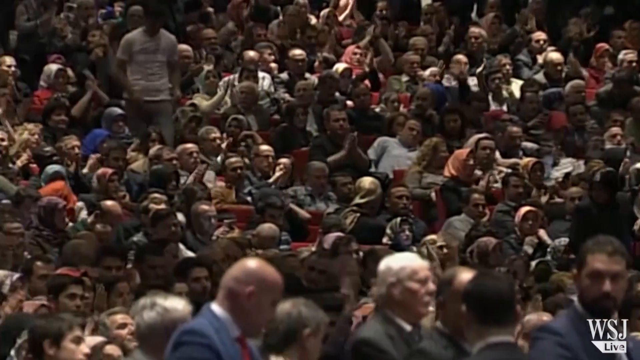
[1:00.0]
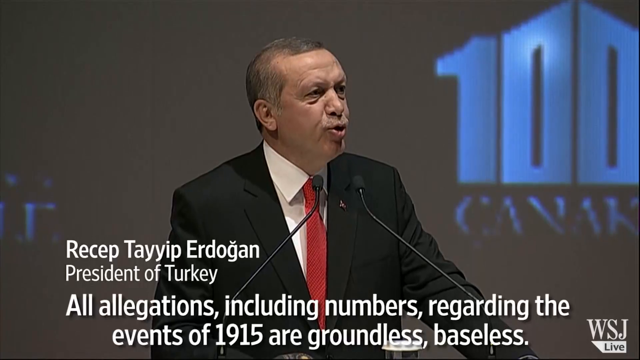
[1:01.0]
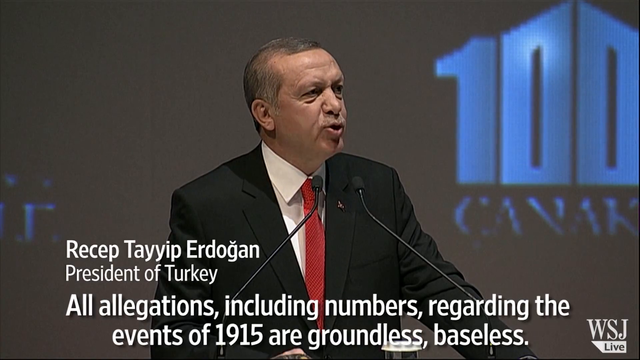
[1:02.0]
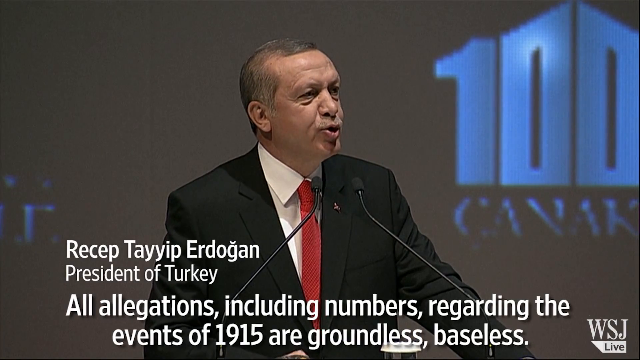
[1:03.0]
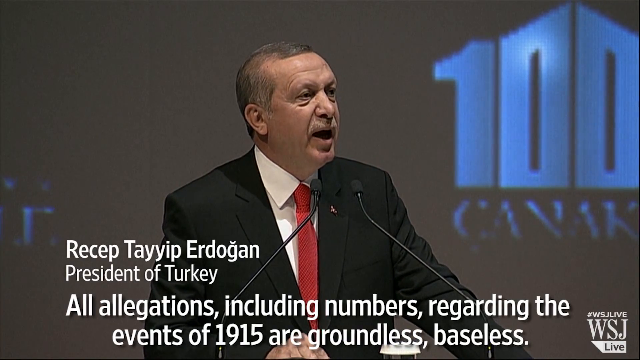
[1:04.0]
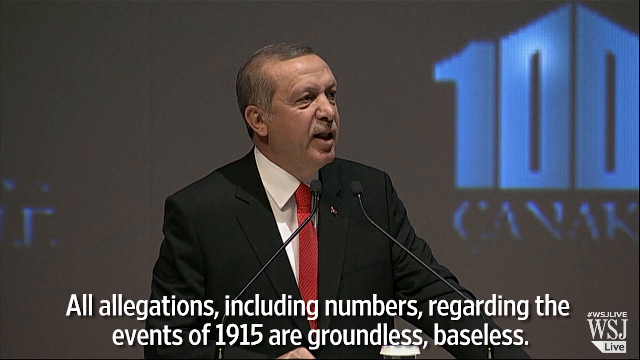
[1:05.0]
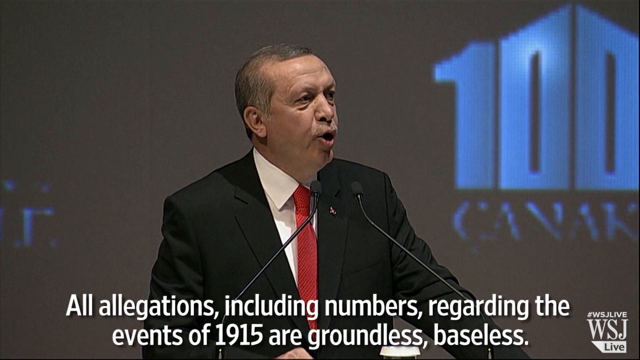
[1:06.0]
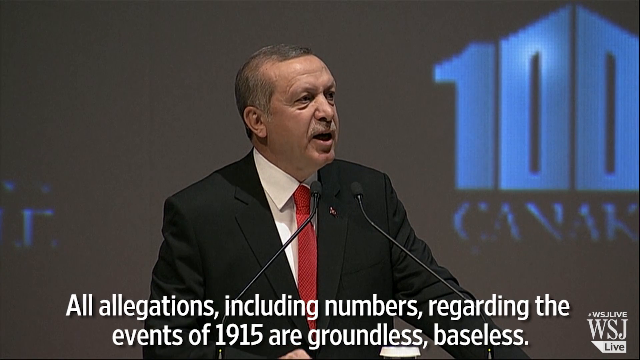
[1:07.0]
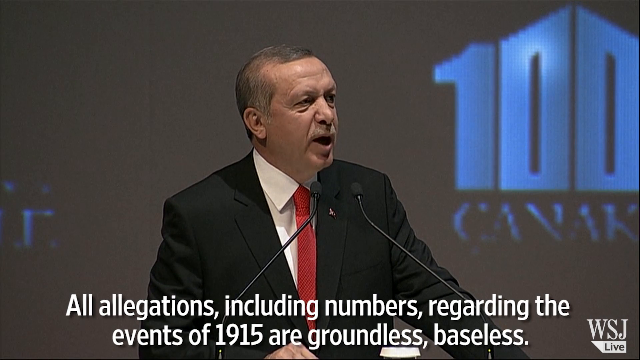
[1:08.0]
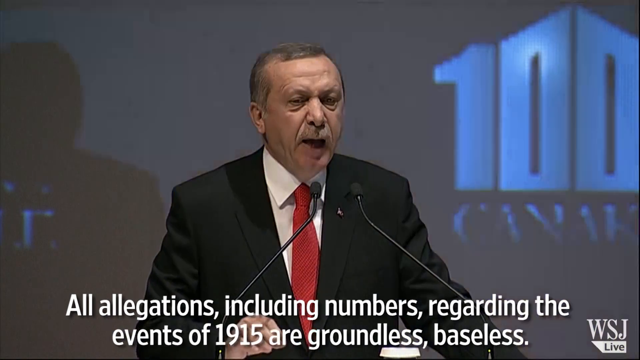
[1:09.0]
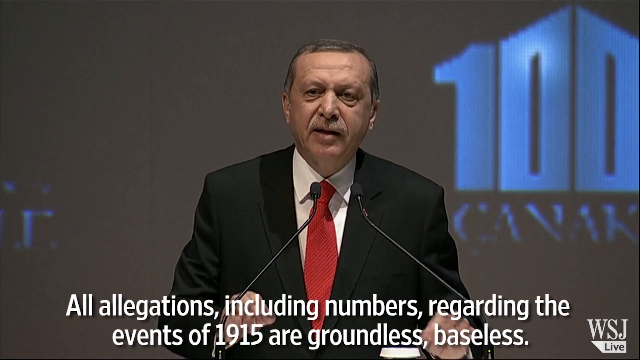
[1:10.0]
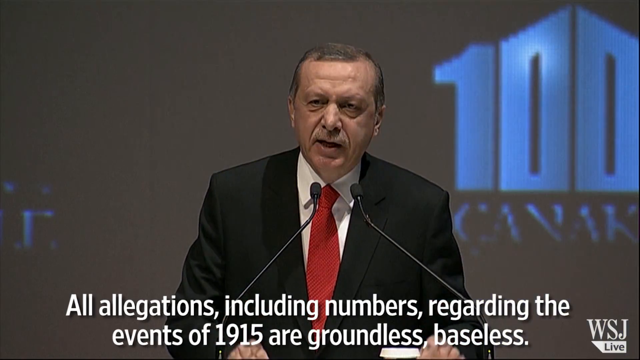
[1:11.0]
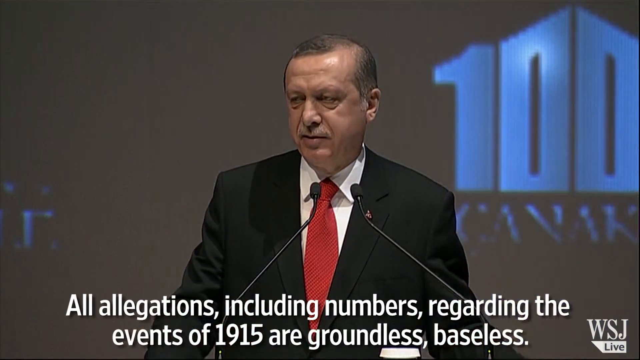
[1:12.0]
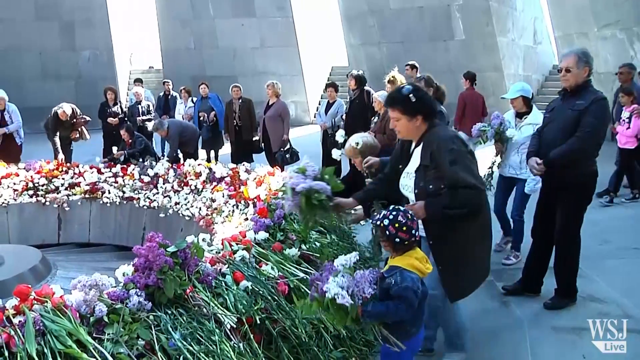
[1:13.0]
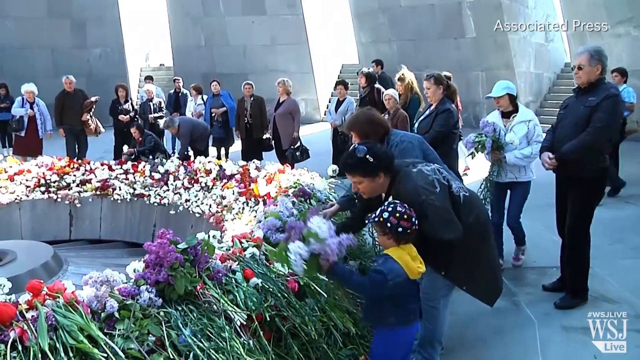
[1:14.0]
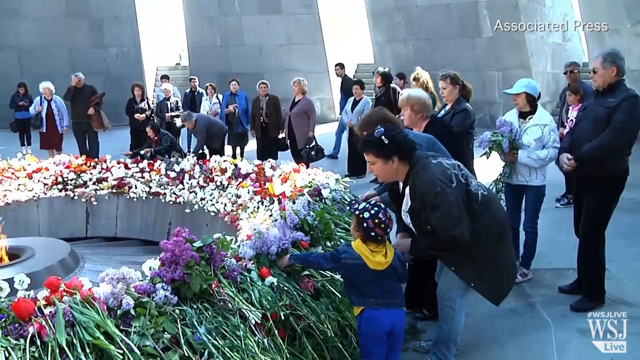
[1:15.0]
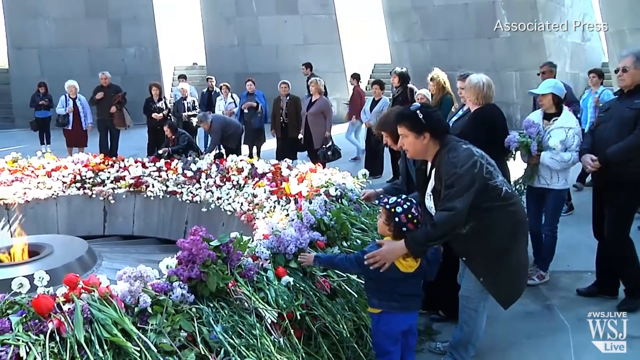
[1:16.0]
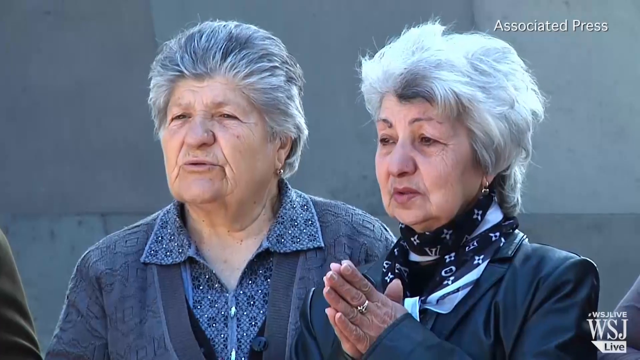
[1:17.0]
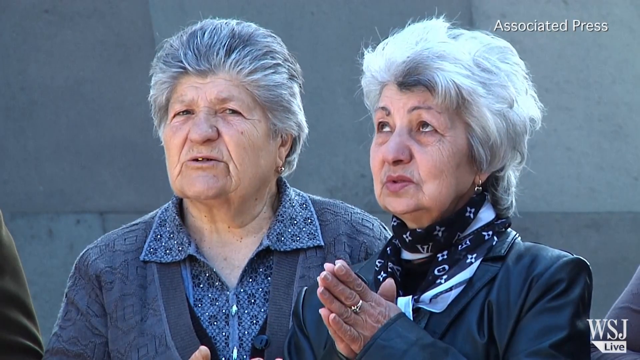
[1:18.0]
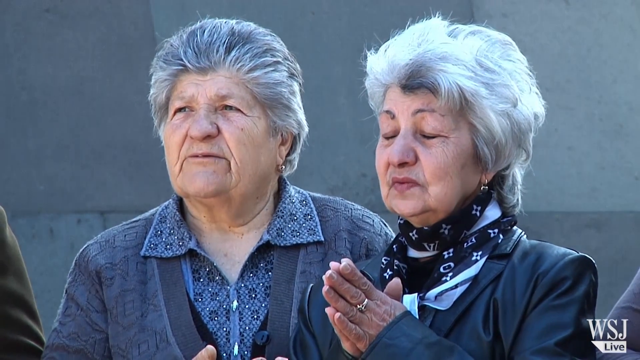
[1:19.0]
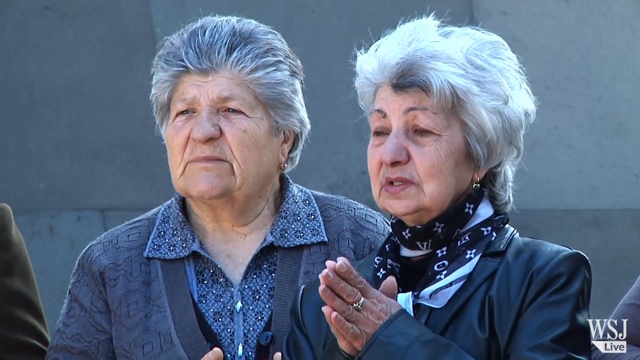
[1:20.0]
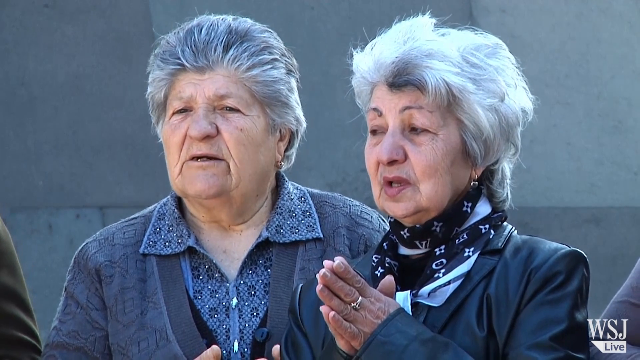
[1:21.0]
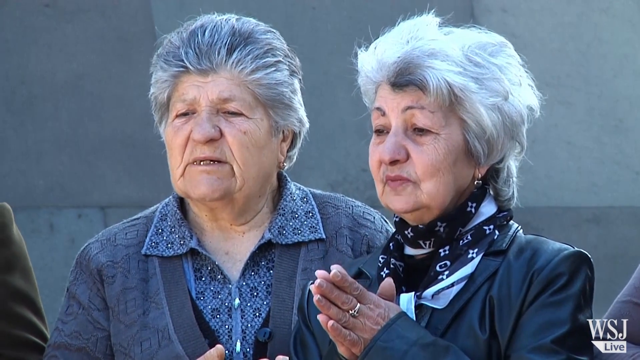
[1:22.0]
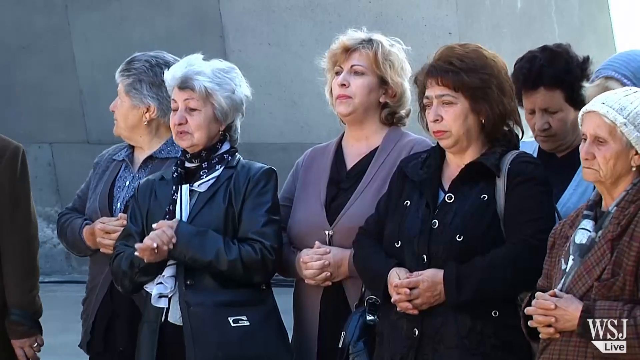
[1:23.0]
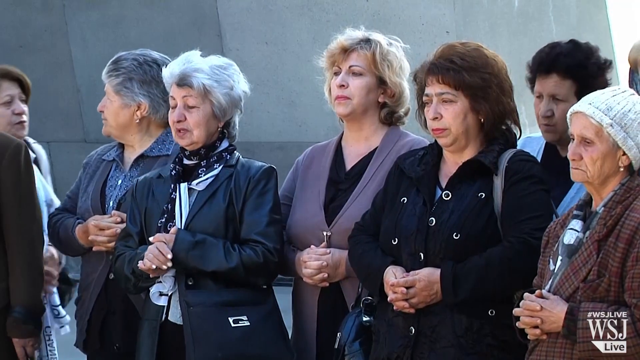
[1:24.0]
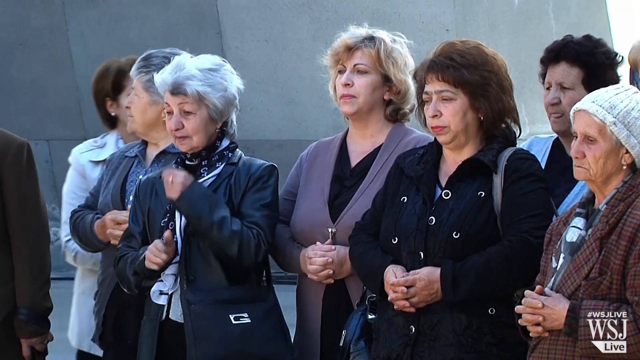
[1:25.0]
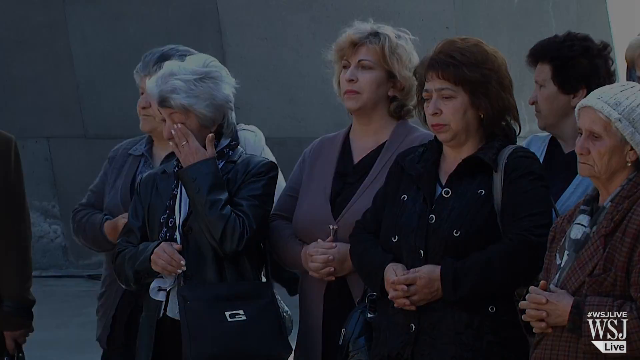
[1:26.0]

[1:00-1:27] The camera views a very large crowd of many people packed together, looking at the man at the podium, who wears a black suit, a white dress shirt and a red tie. In the top right, text begins "100", and in the bottom left the text reads "Recep Tayyip Erdogan, President of Turkey." The camera focuses on him as he speaks for quite a while. His head moves from left to right, and the view scans some sort of round, concrete monument with flowers laid on top of it all around in a circle. People, including children, are scattered around, walking up to it and putting flowers on the memorial. The scene then switches to two gray-haired ladies side by side; one looks directly at the camera, while the other looks up to the sky and speaks.